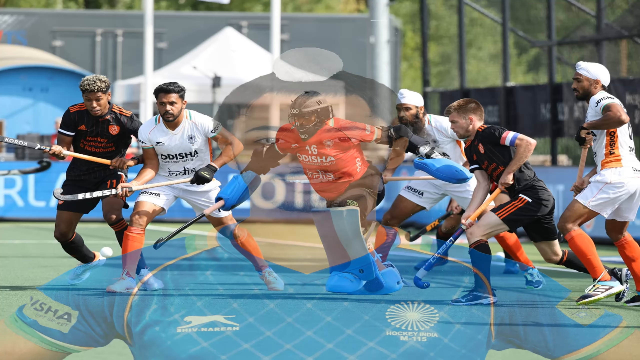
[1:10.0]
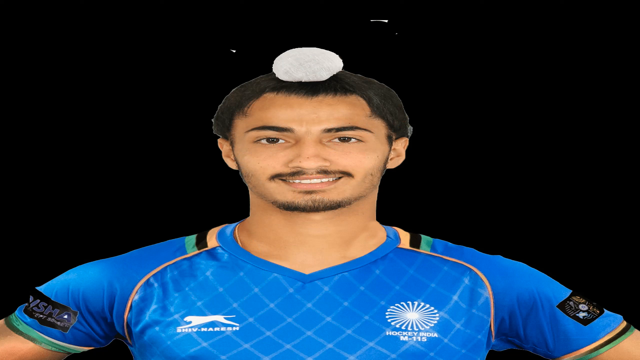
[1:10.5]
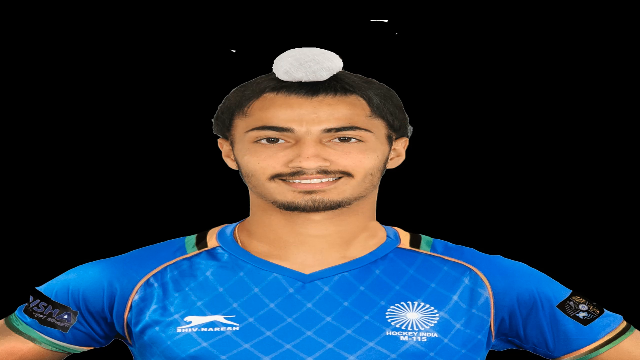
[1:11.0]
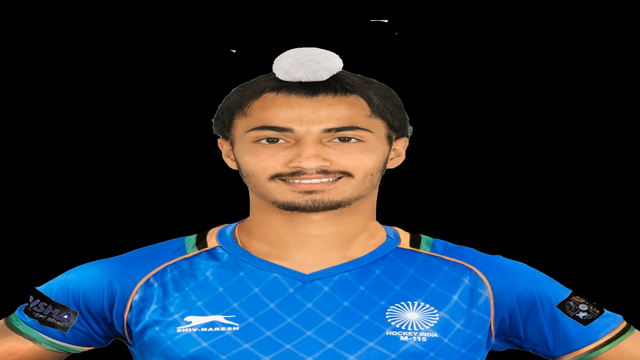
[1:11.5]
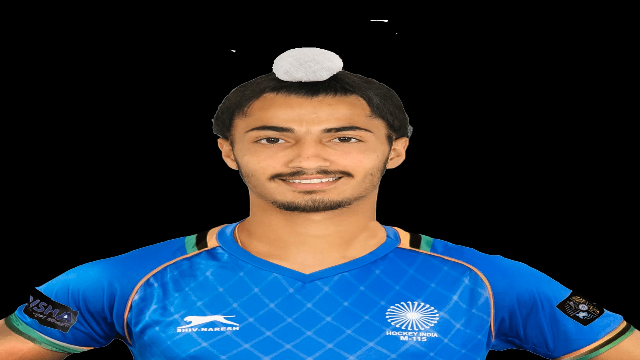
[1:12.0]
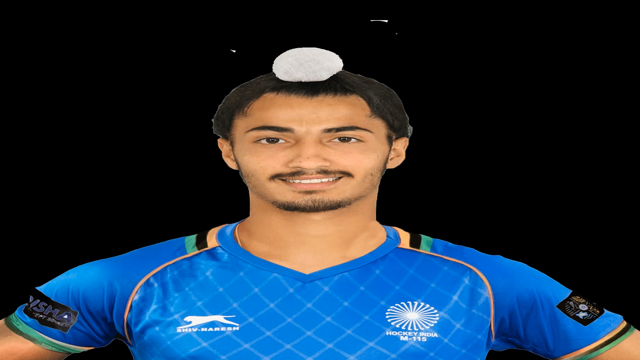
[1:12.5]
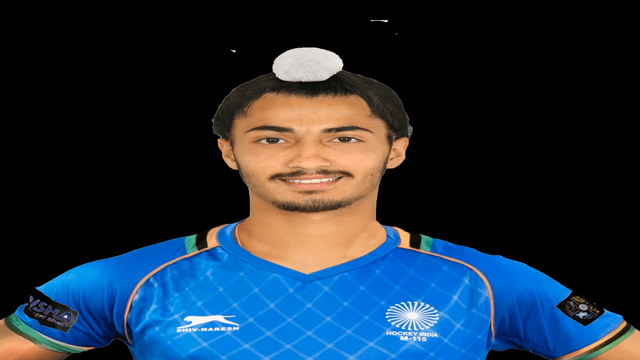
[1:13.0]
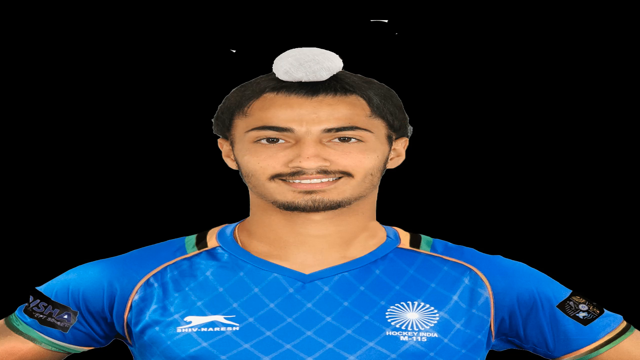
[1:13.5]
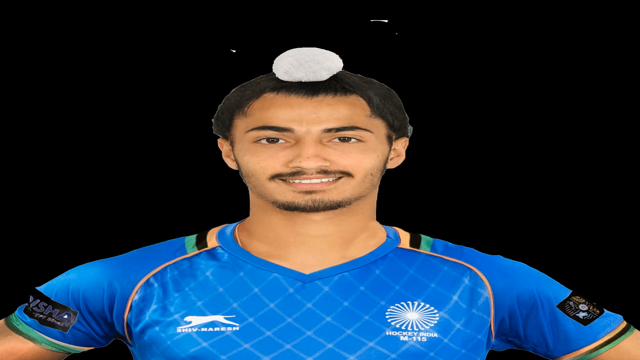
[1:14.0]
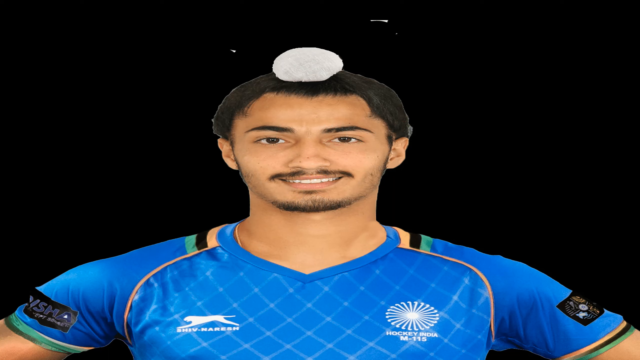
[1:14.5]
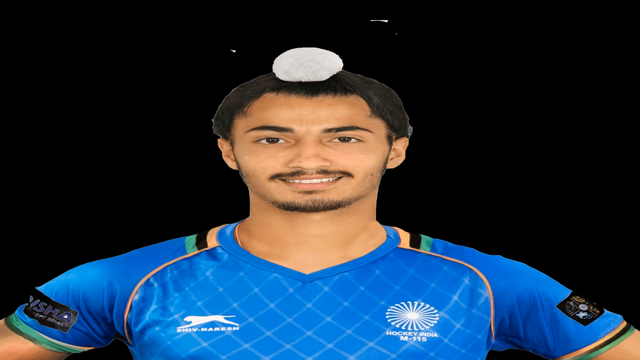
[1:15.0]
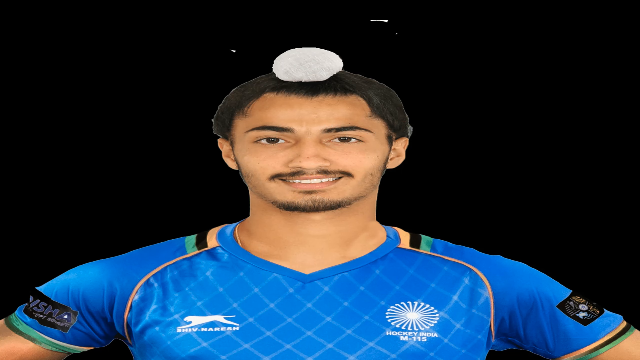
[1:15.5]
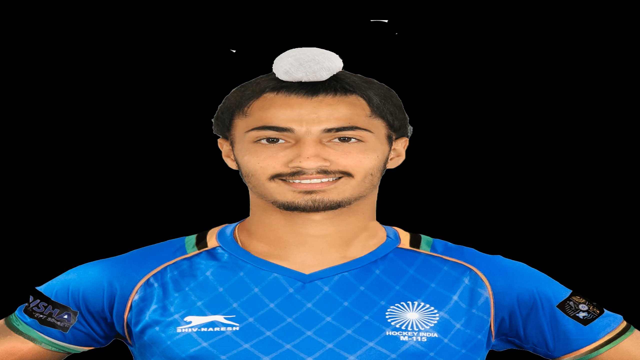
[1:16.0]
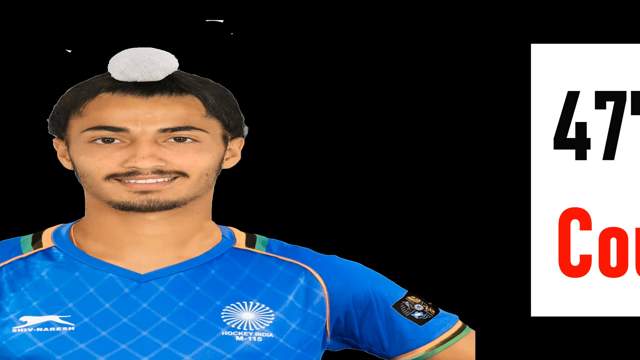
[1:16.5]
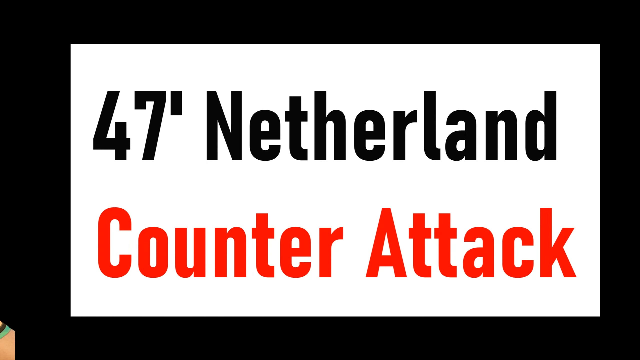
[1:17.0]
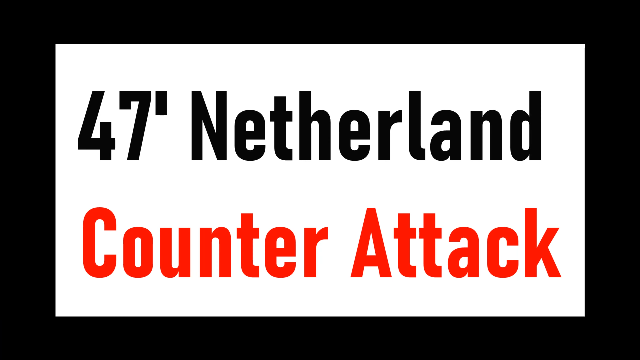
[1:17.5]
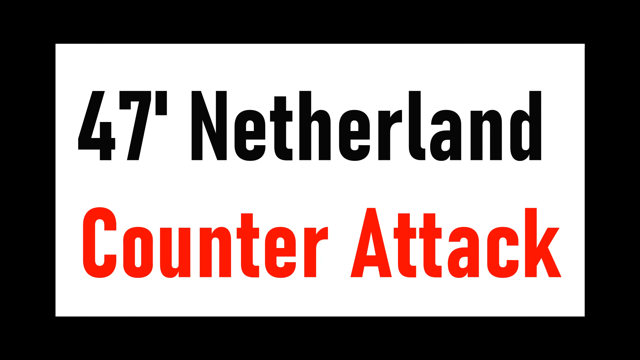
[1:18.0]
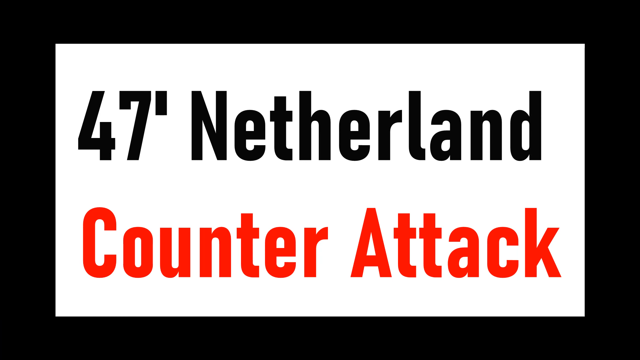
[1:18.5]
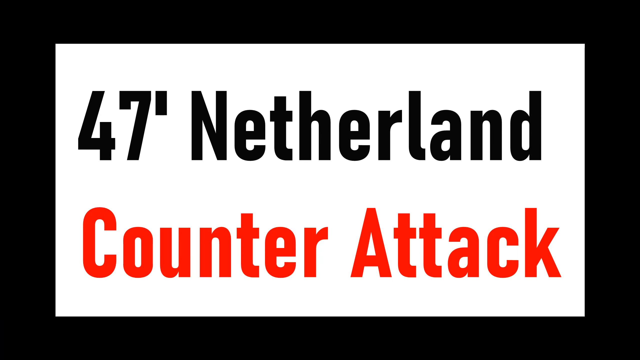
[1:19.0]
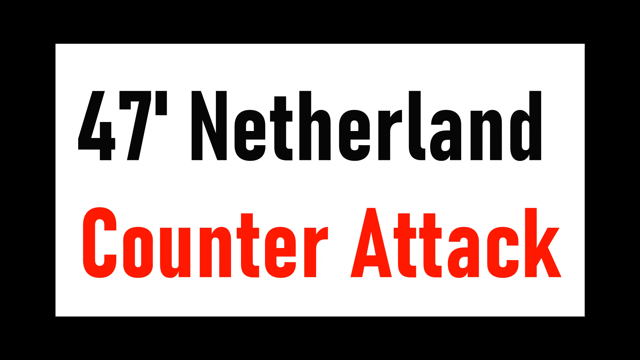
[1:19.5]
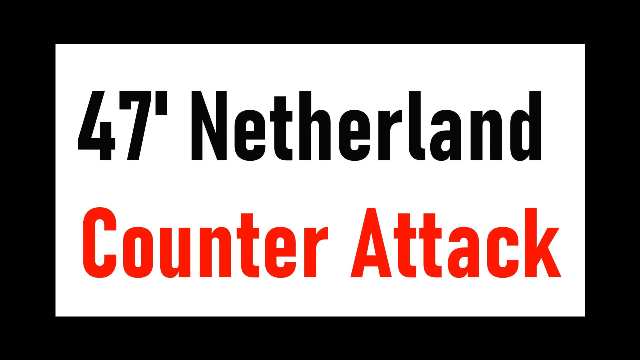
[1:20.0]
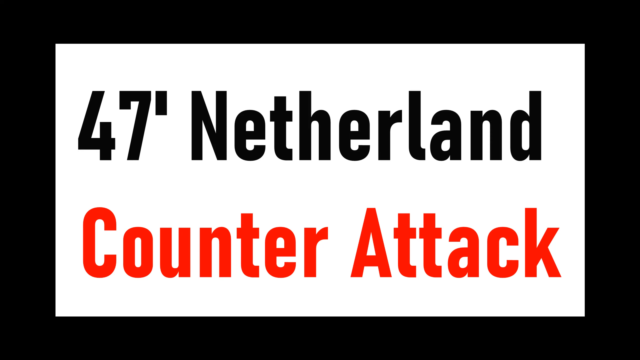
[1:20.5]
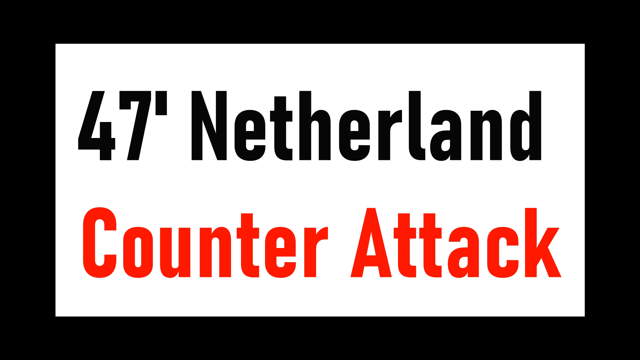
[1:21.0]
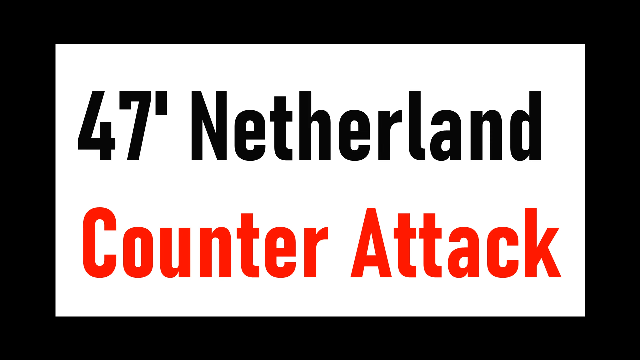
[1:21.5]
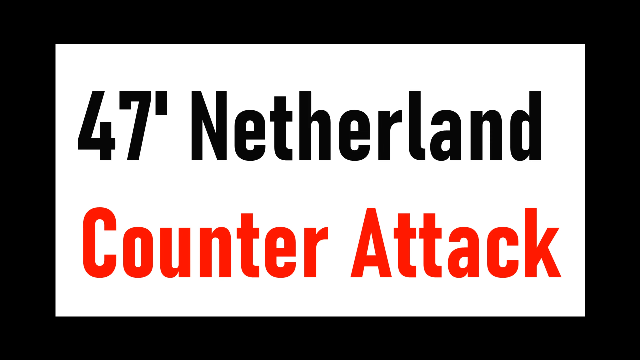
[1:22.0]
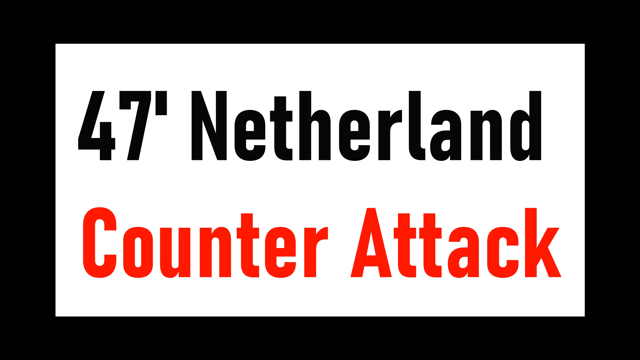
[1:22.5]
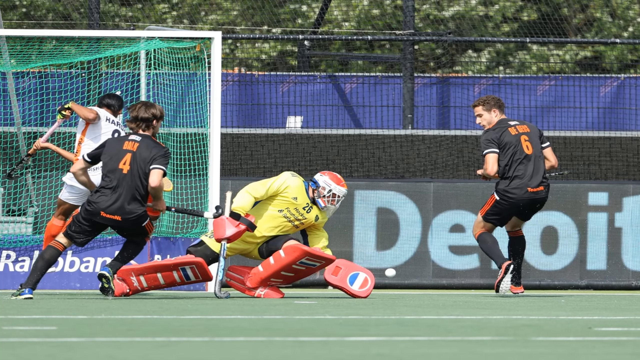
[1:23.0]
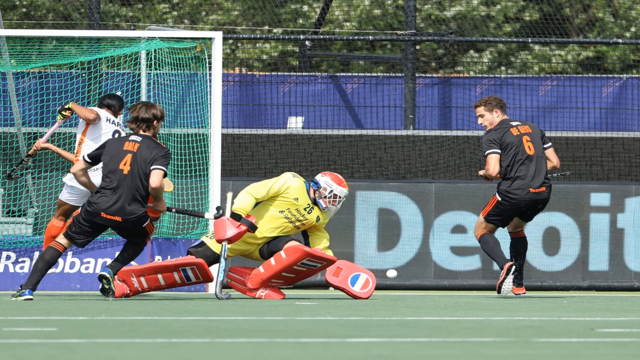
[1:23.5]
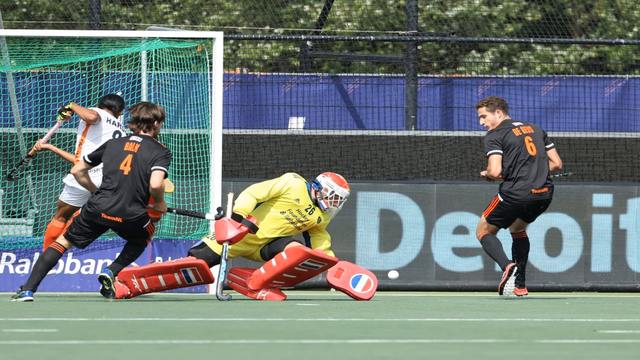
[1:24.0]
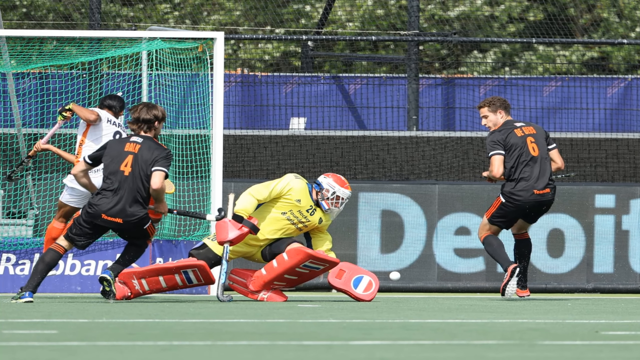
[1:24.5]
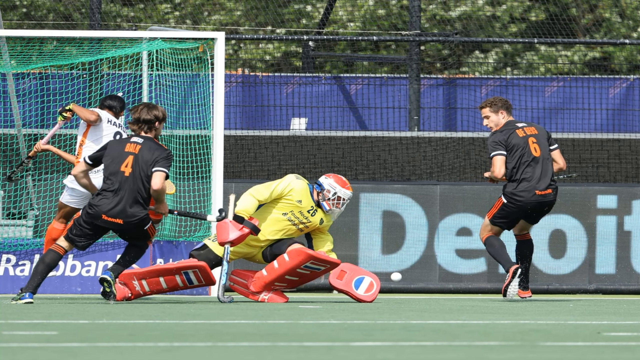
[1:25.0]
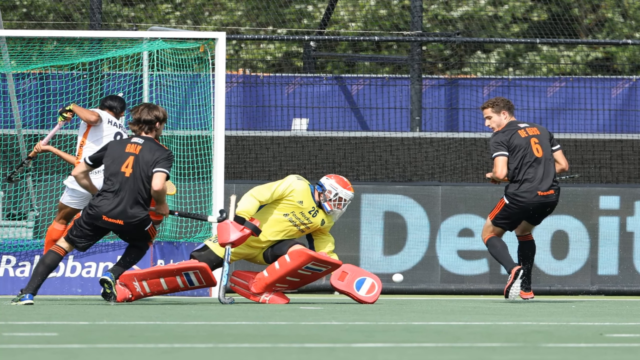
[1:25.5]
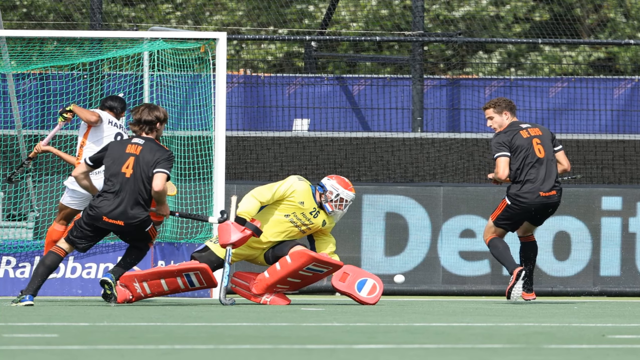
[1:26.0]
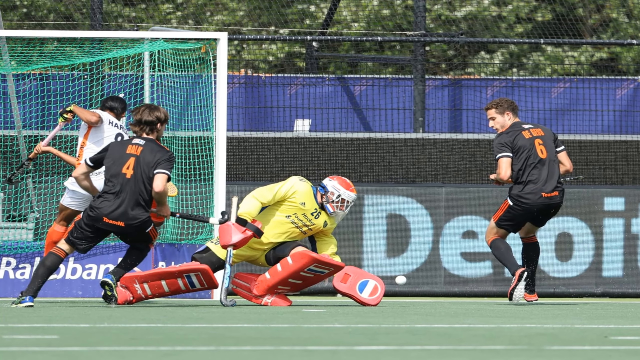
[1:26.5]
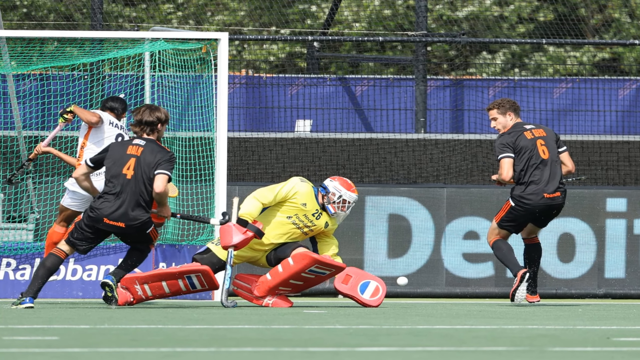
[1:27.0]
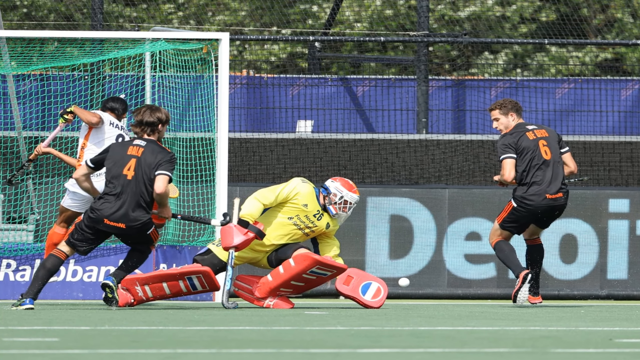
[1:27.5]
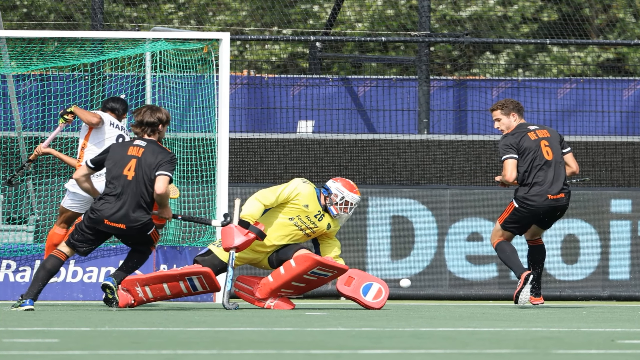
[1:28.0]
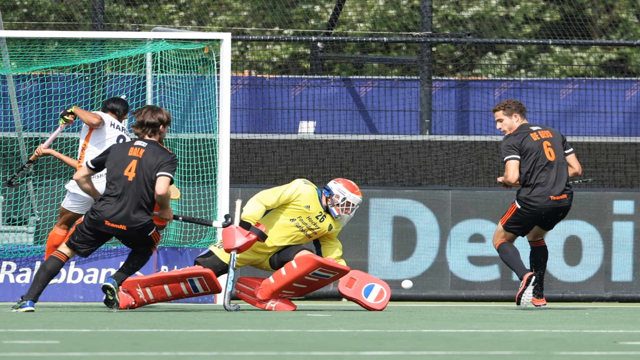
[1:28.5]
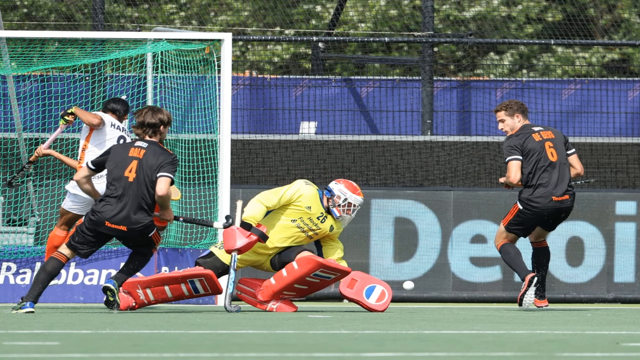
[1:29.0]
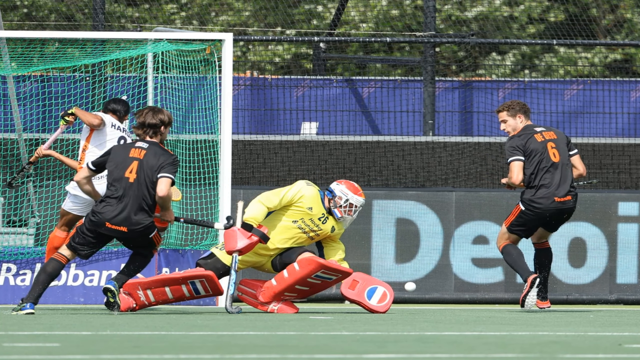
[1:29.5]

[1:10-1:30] A field hockey team is shown out on the field. The view swaps to a guy with what looks like a white rock on his head; he is somewhat dark-skinned and possibly Mexican. His jersey has some yellow, green and black stripes. The rock appears to be on his head in this one picture. A sports headline follows, containing the words "Netherland counter-attack". Next, a goalie wearing heavy padding on his arms and legs dives on the field, while some guys in black jerseys carry hockey sticks and jump in the air in an action shot. They are by a goal and seem to be in some kind of field with a big fence around it.